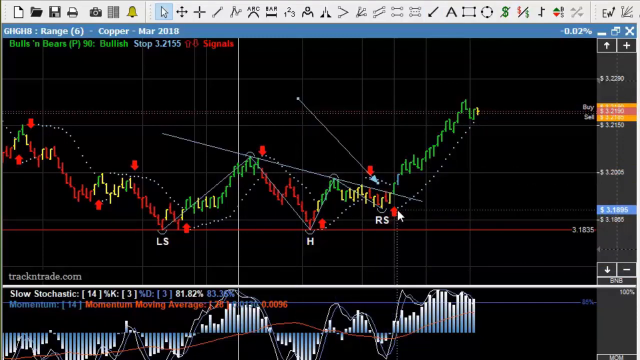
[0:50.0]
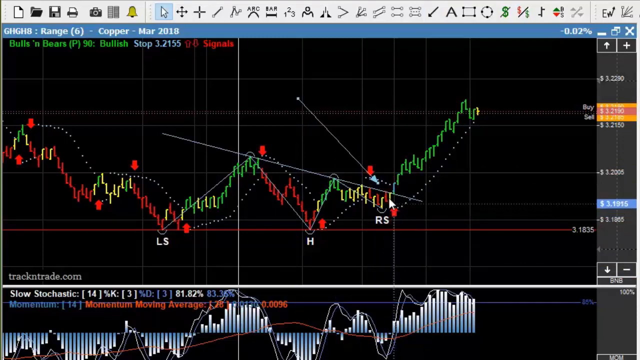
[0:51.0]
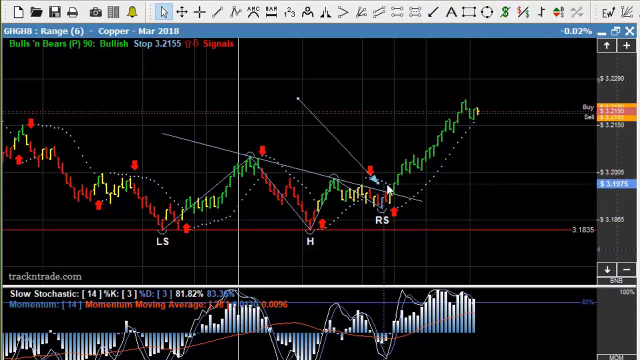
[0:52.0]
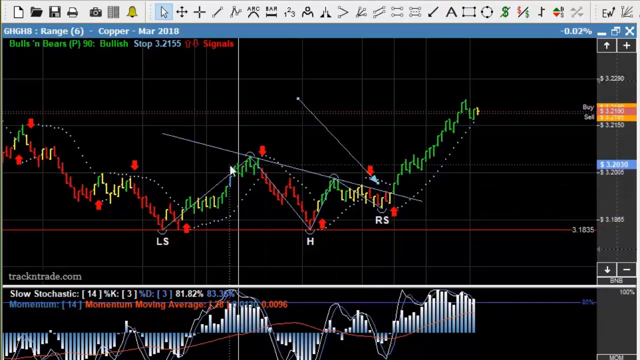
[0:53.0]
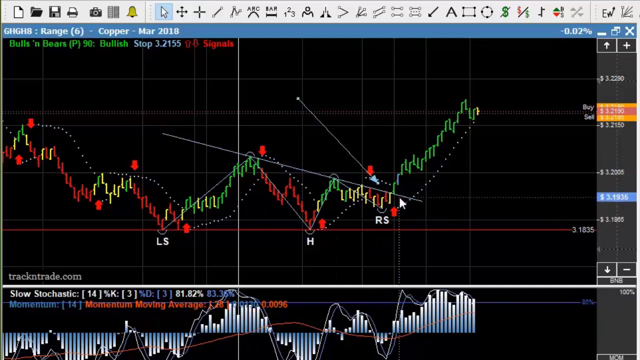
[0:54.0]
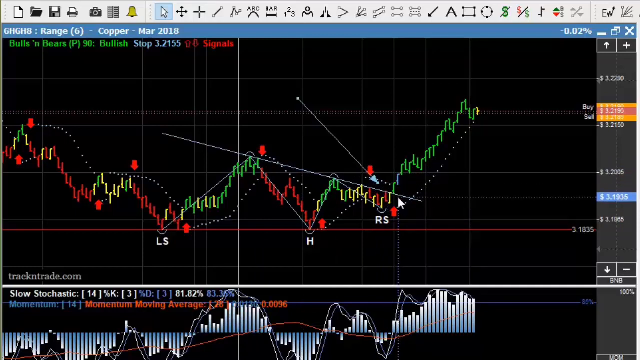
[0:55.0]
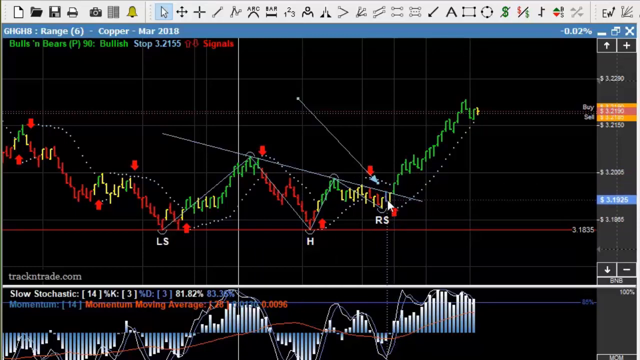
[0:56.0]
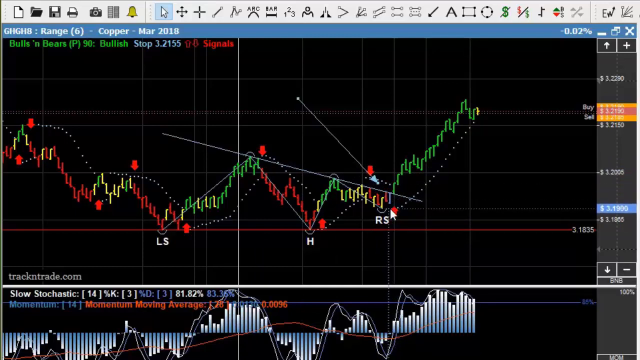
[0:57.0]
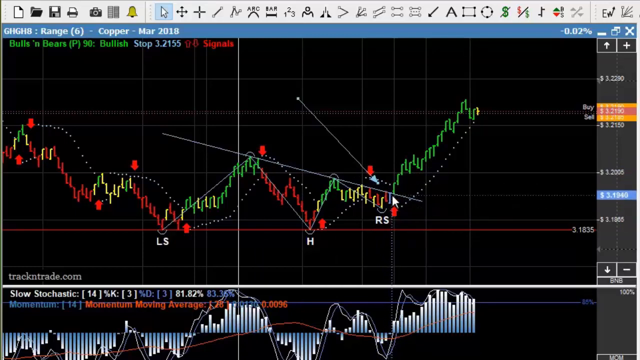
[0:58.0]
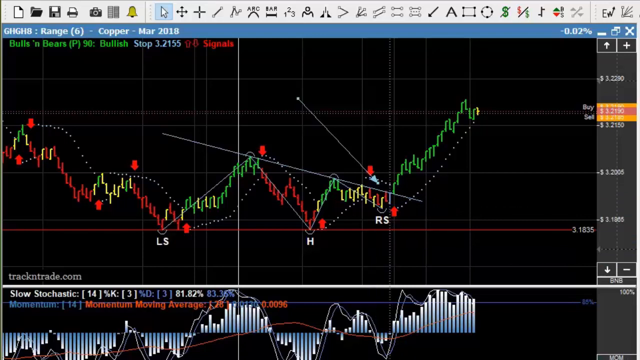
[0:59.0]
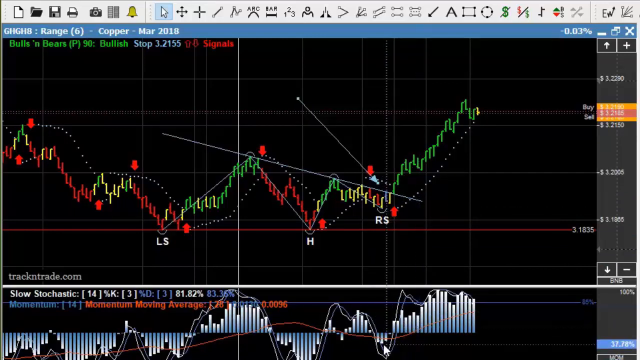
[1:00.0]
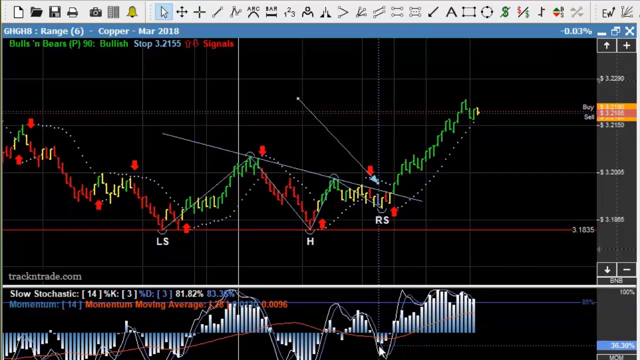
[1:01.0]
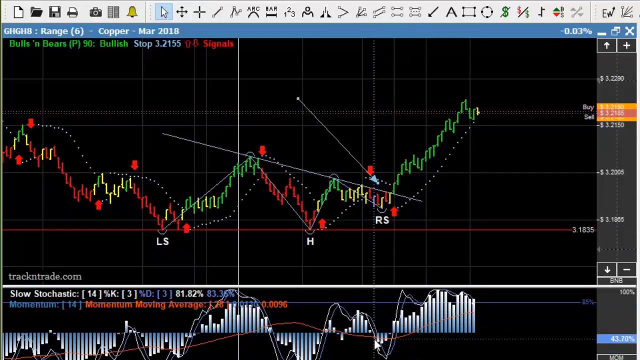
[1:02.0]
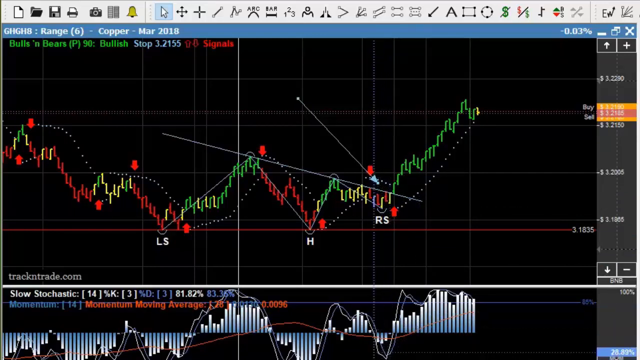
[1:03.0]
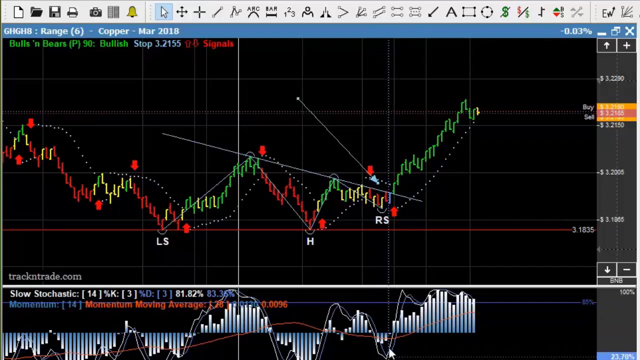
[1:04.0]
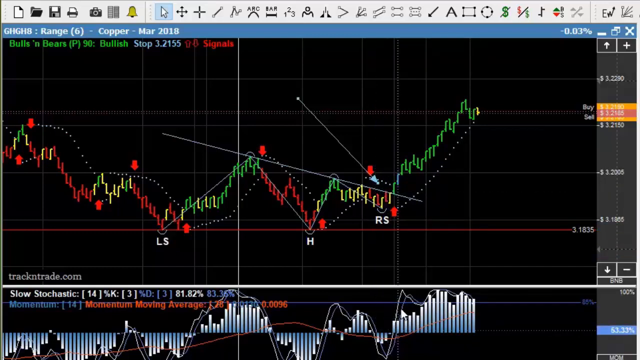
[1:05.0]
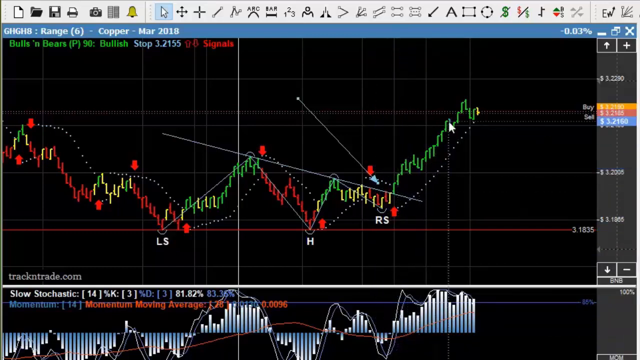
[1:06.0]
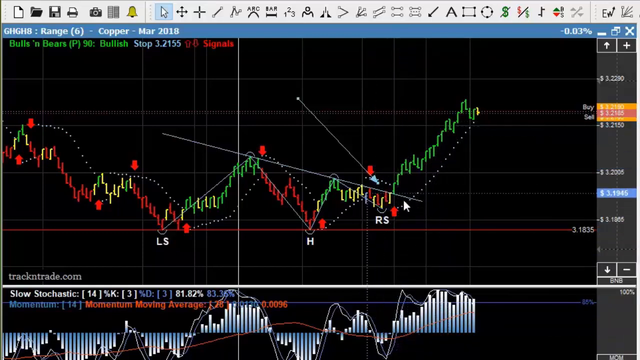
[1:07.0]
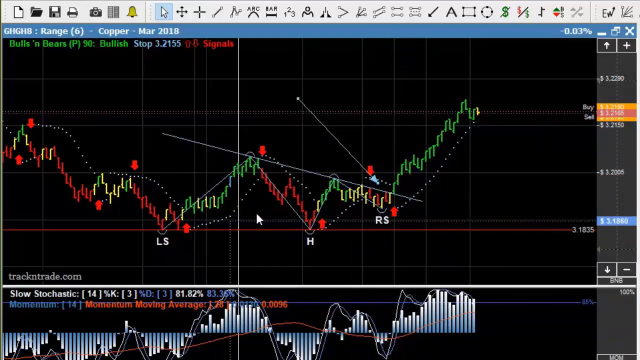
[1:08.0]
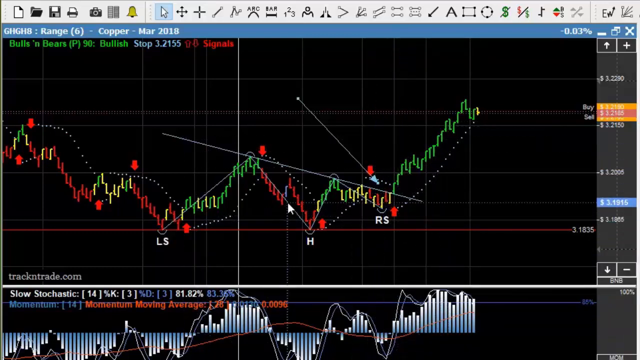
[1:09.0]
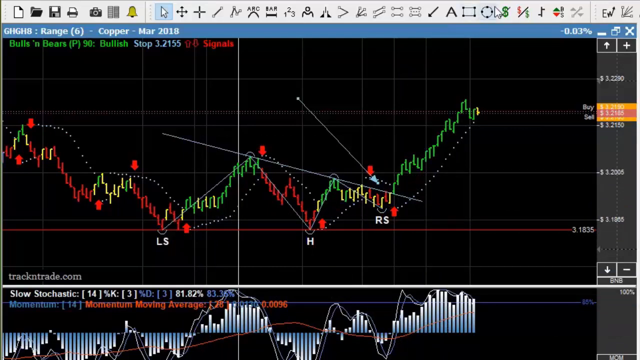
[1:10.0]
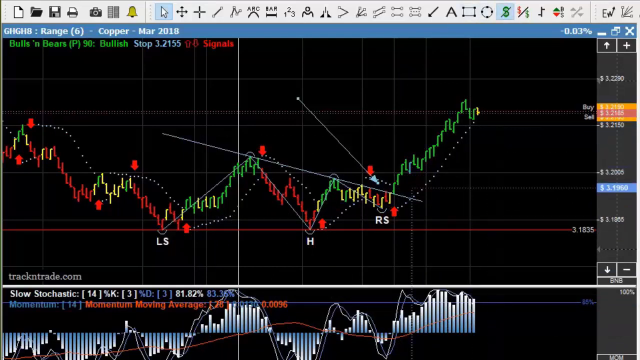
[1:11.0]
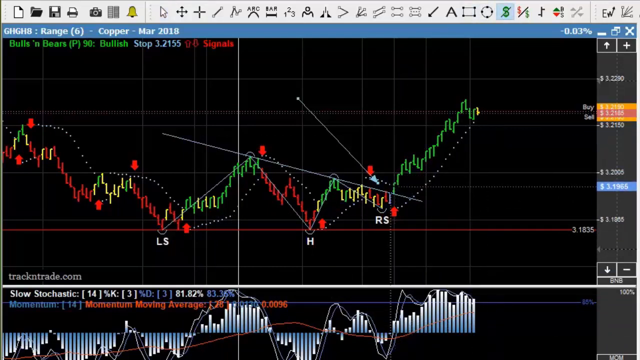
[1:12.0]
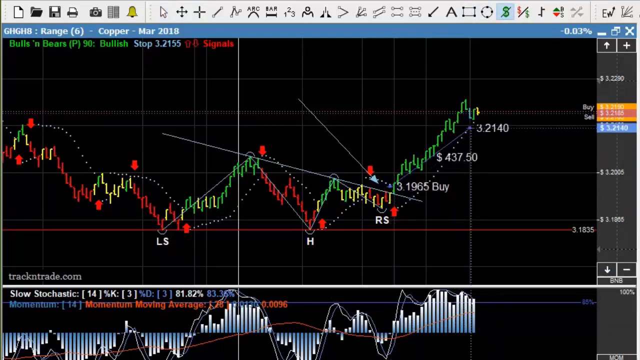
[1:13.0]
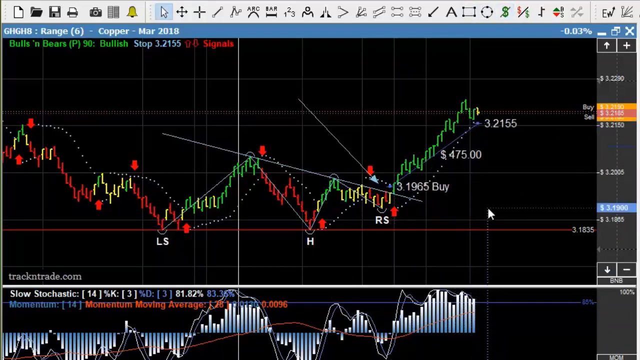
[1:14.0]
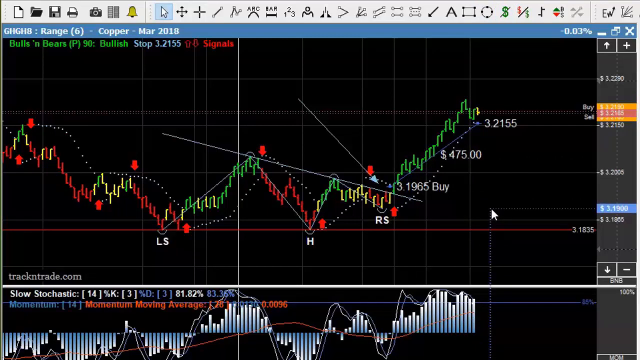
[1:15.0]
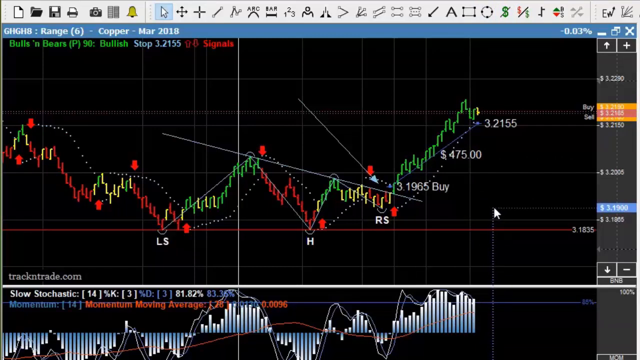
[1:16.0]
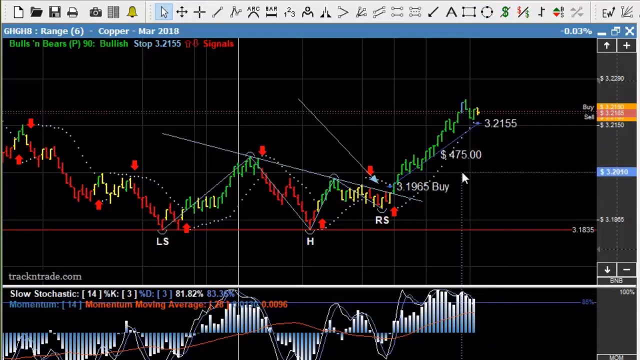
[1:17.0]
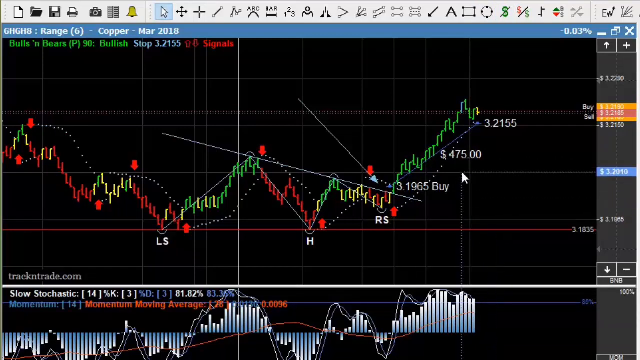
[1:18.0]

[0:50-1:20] Lines are being drawn on the computer screen, starting at LS and going up to an H, then H, H and RS. A white line runs diagonally downward a little. The cursor places a white dot near the very middle top of the screen, and an arrow is drawn pointing down, so the cursor and the arrow are almost in the same spot. As the cursor moves, the screen reads "look along this line," and a couple of things light up. Something moves across and across, with a straight line moving around, while the cursor goes all over the place. Numbers appear: 3.19655, 475 and 32155. The chart turns green as it goes up, and a couple of lines appear, as if different things are being tried.